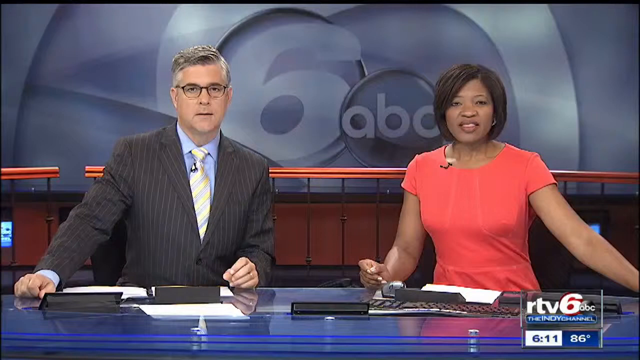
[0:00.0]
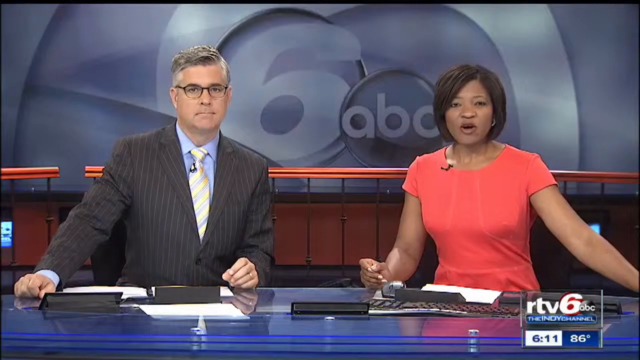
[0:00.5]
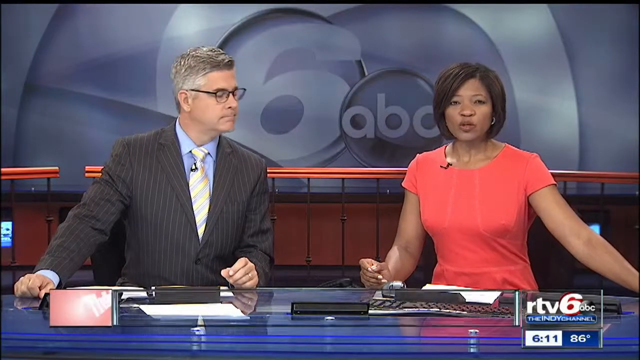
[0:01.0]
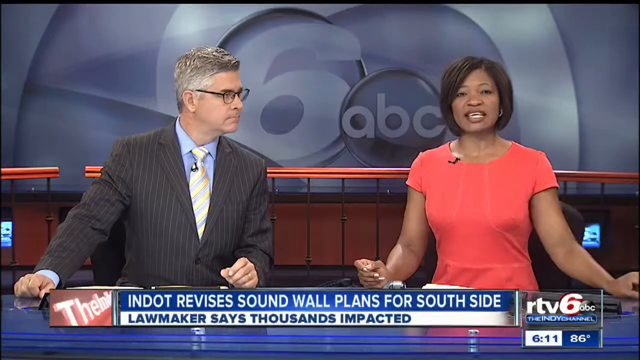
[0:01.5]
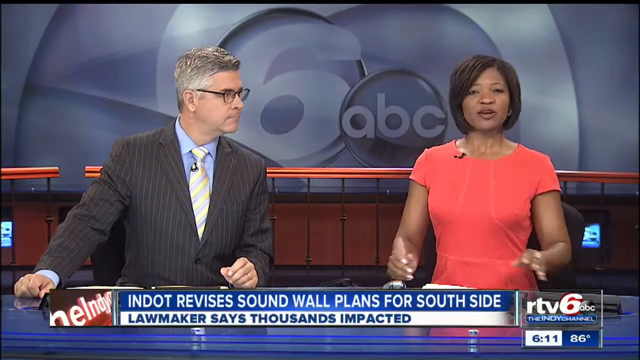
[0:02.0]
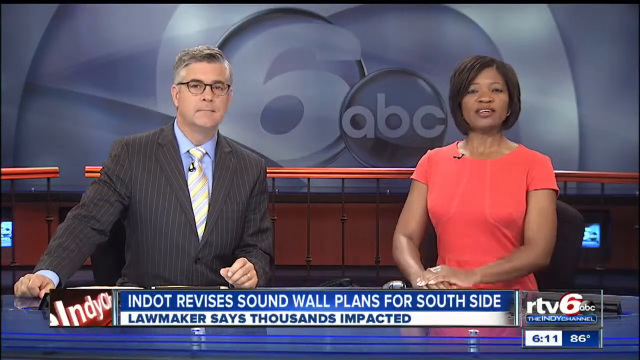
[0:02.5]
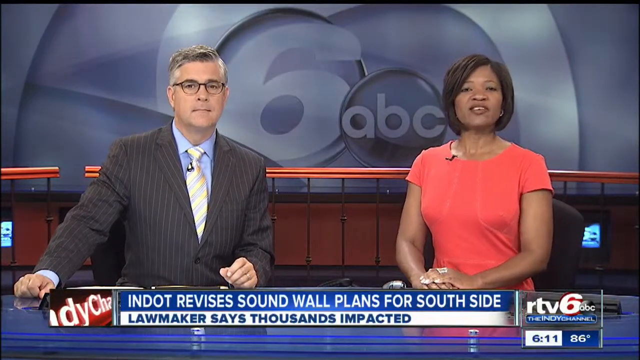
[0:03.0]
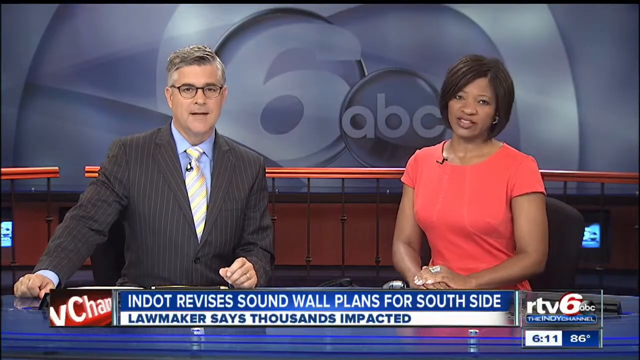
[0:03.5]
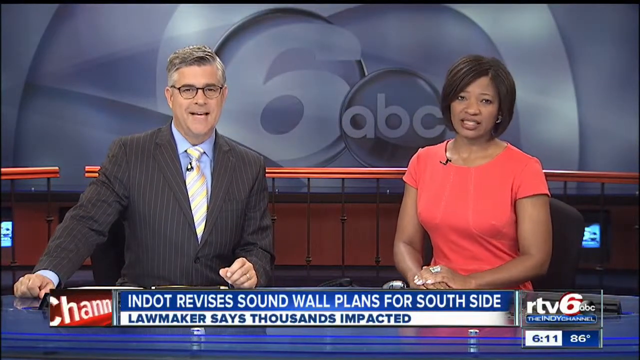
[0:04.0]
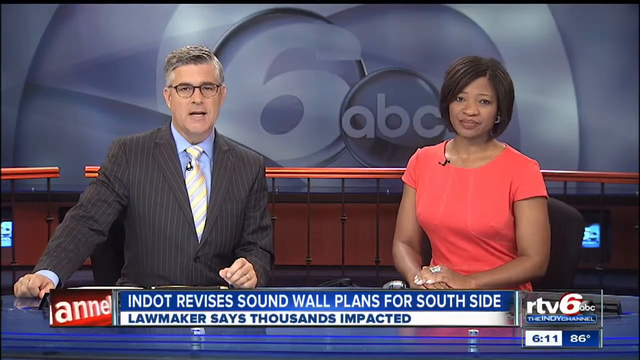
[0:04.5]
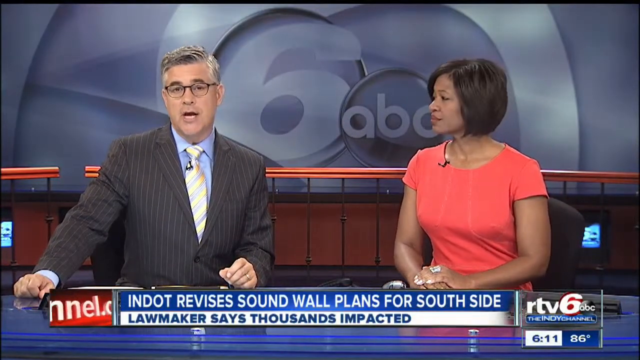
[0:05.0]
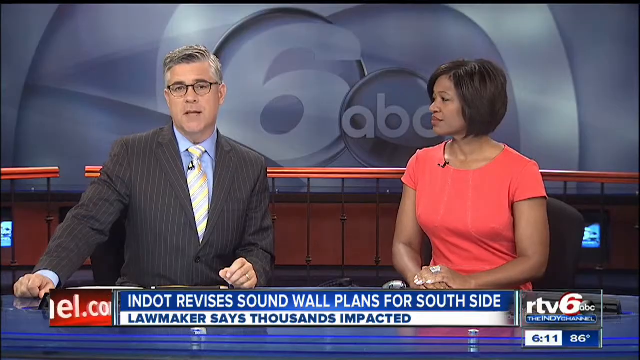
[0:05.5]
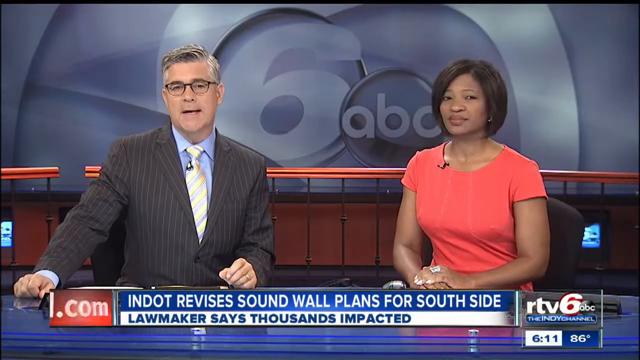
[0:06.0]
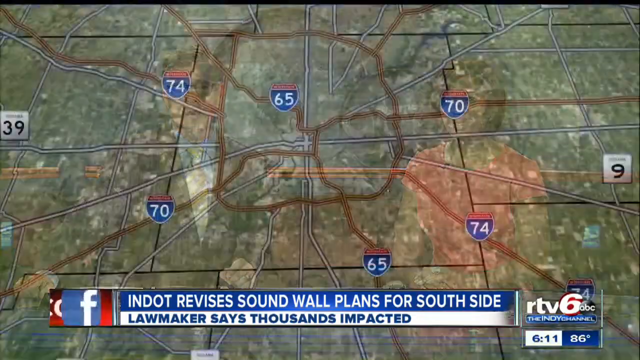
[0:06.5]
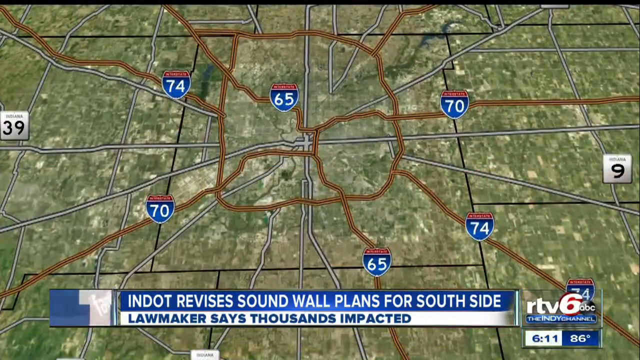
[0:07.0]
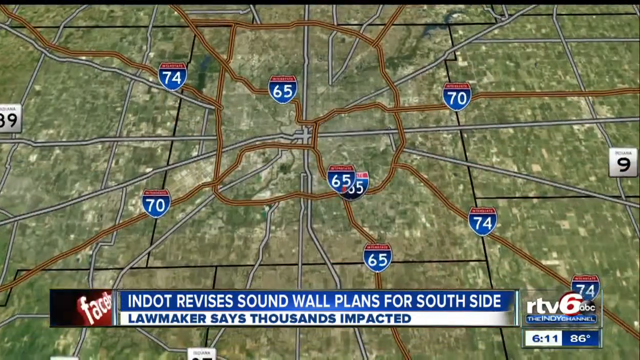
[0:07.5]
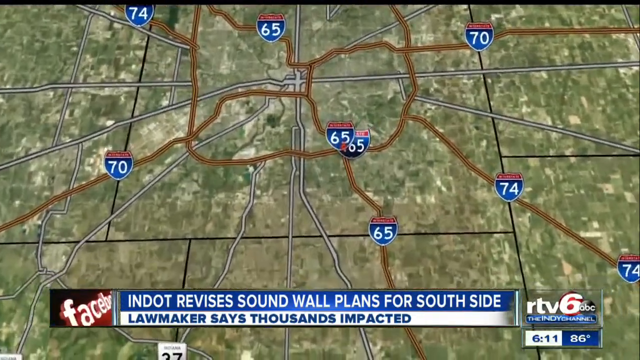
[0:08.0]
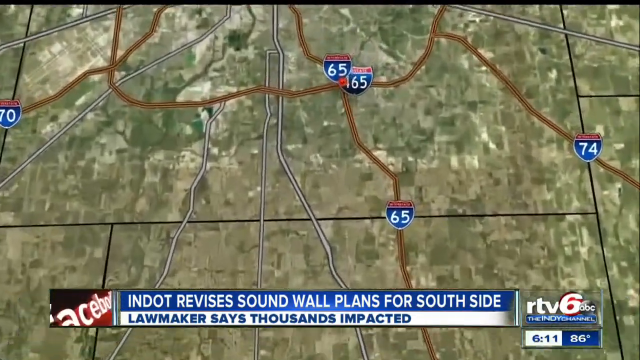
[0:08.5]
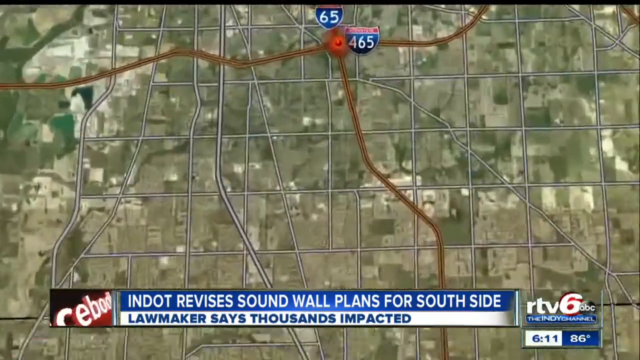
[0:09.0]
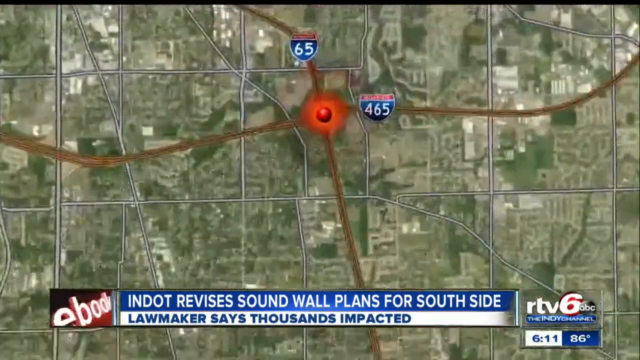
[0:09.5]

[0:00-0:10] The main focus seems to be an object called a sound wall, meant to block sound so that conversations cannot be heard through it; it goes around each house. Area 64 and area 65 seem to be the areas likely to be impacted by the sound wall.